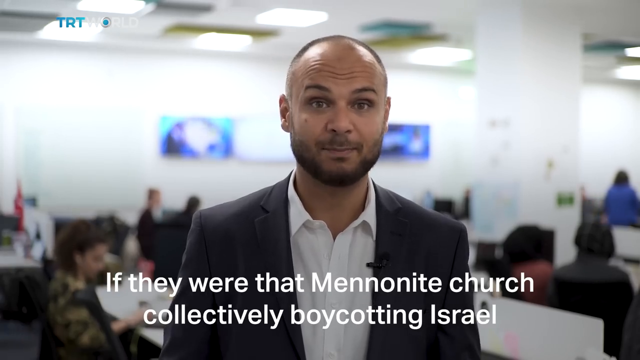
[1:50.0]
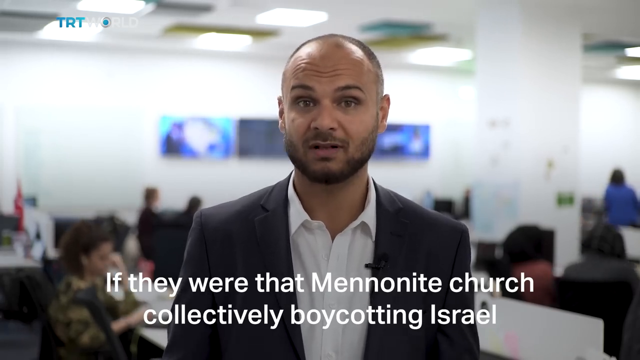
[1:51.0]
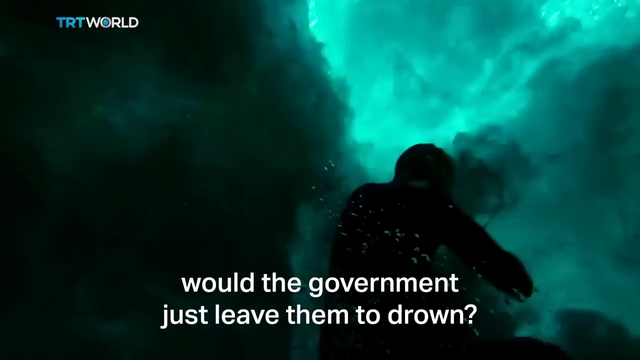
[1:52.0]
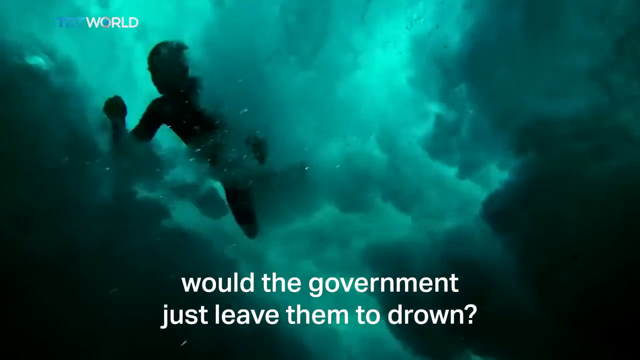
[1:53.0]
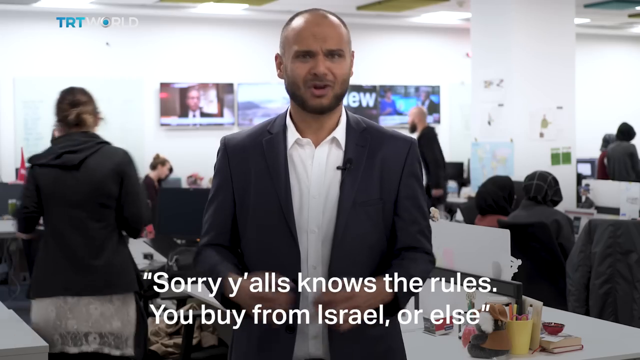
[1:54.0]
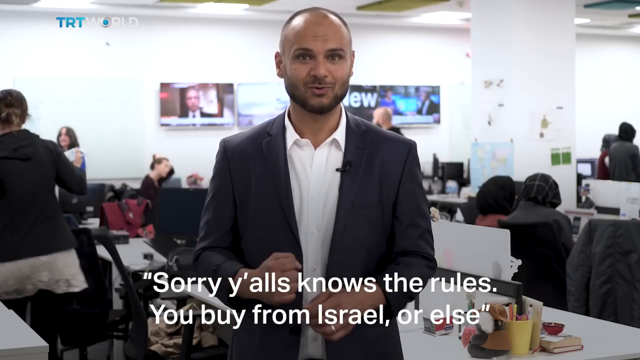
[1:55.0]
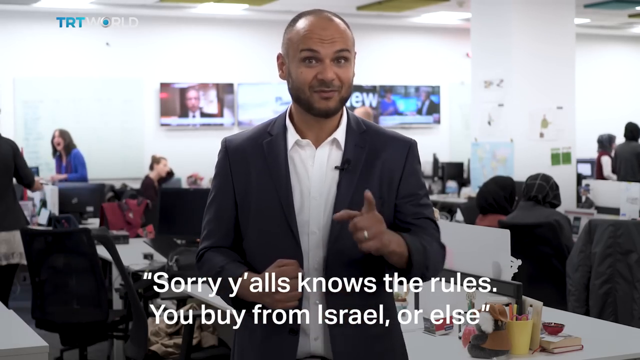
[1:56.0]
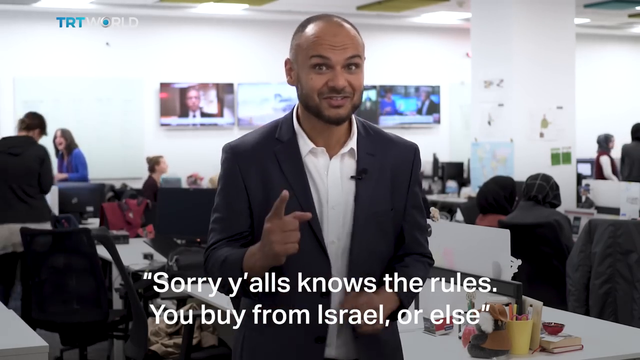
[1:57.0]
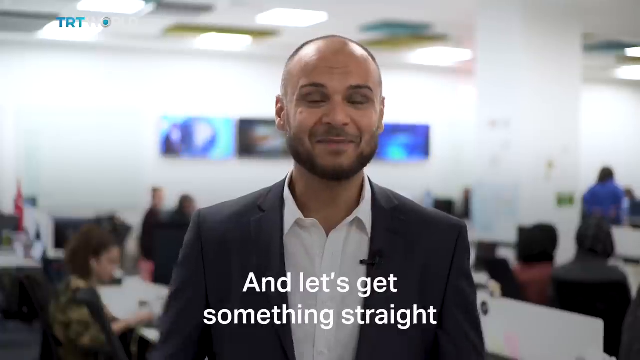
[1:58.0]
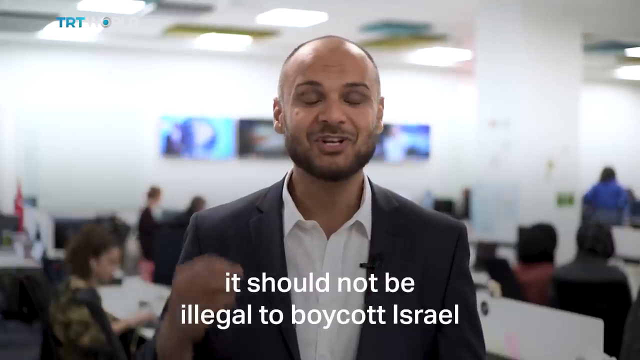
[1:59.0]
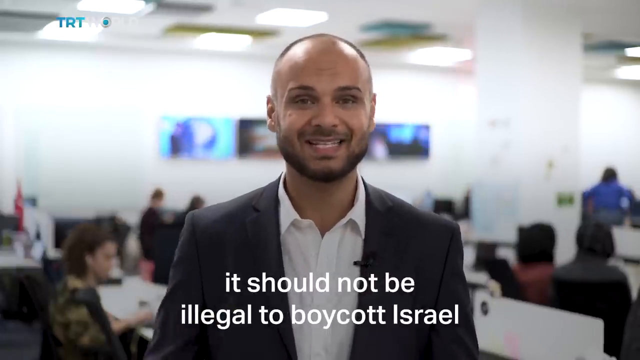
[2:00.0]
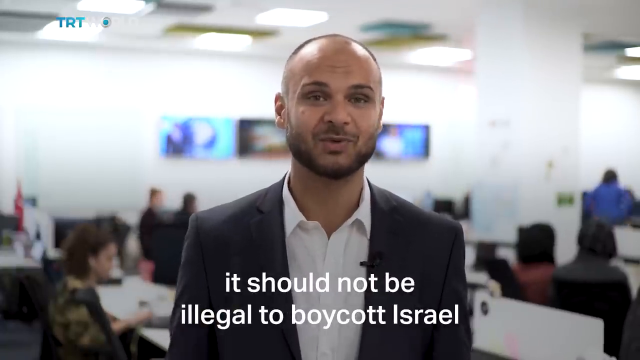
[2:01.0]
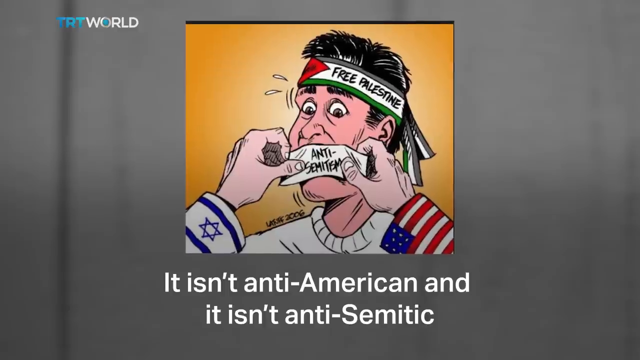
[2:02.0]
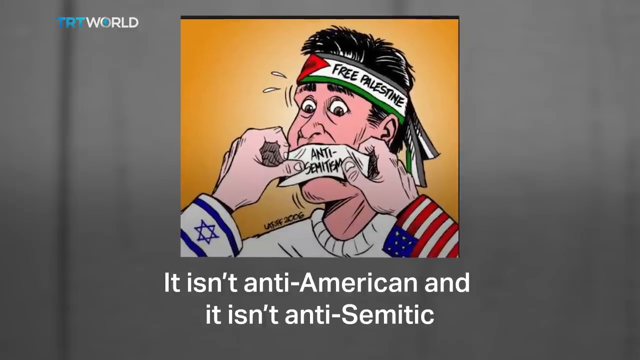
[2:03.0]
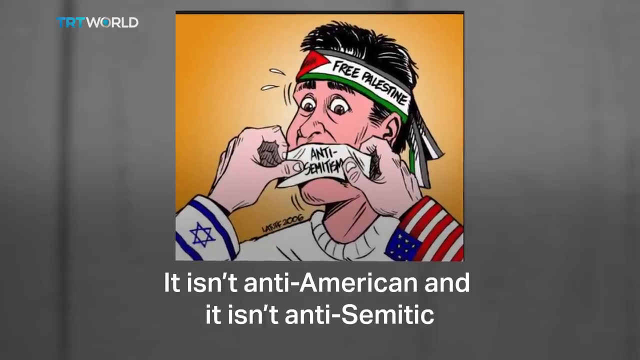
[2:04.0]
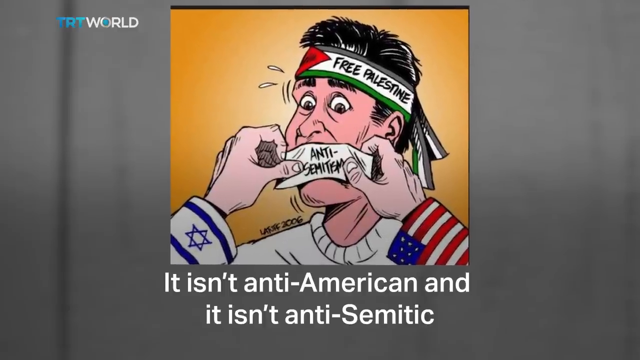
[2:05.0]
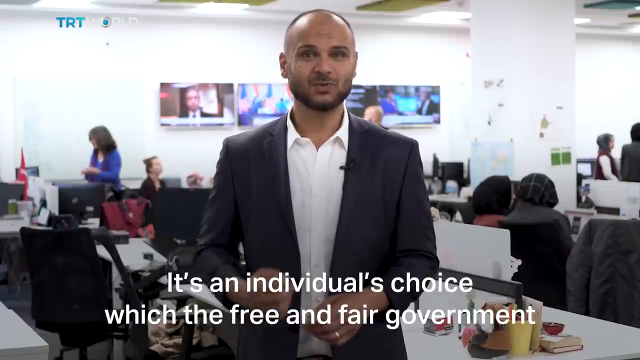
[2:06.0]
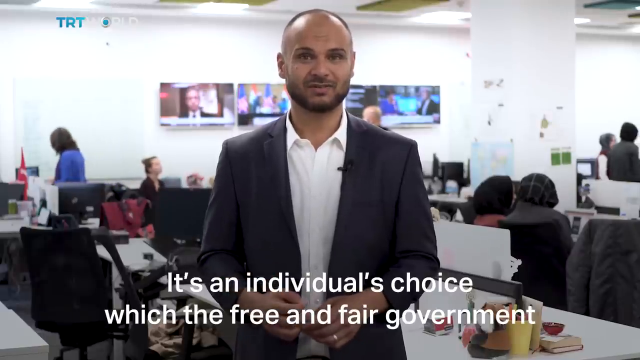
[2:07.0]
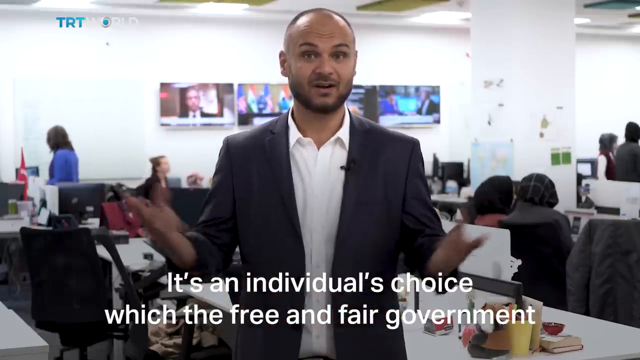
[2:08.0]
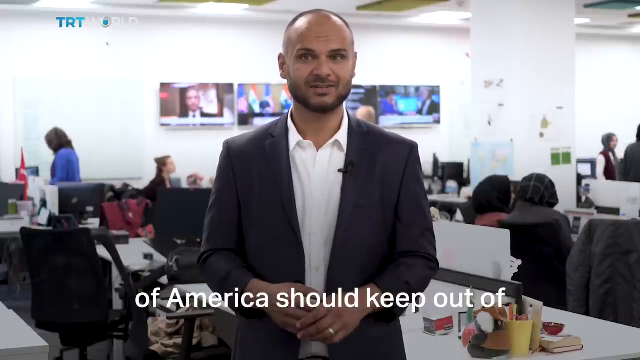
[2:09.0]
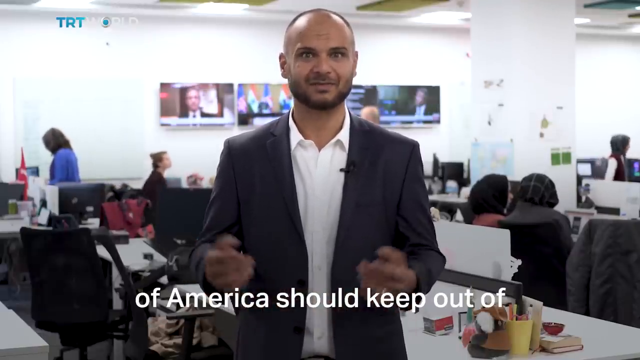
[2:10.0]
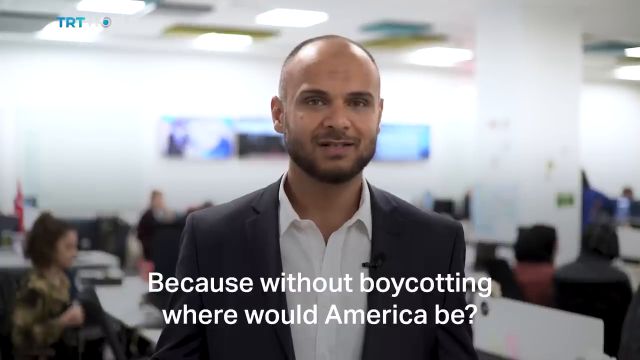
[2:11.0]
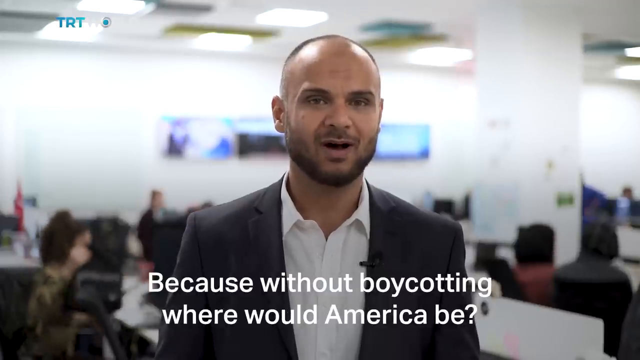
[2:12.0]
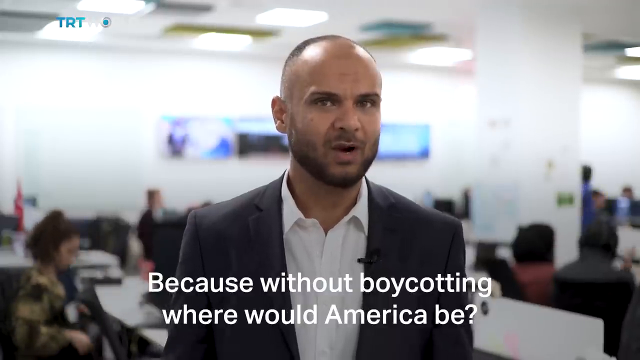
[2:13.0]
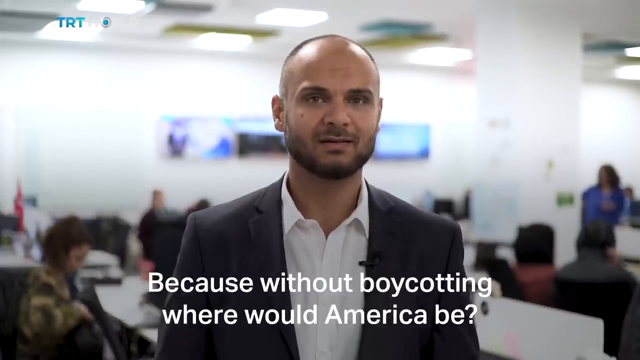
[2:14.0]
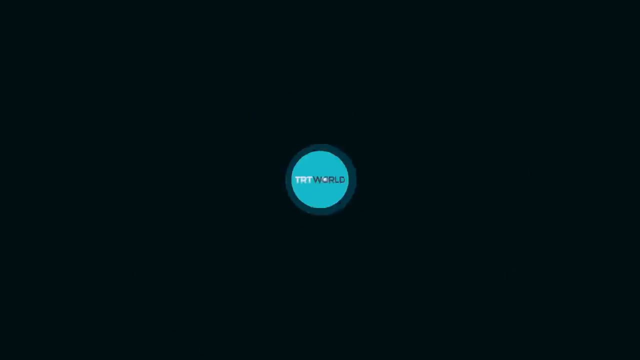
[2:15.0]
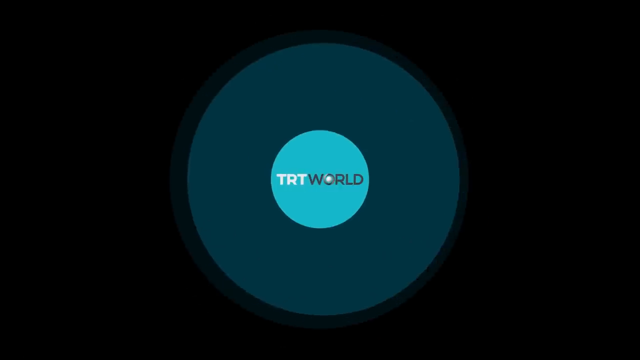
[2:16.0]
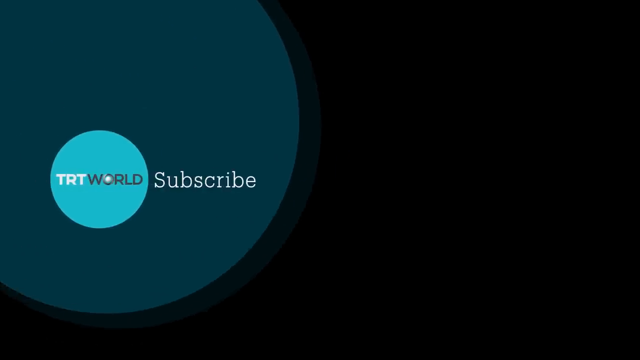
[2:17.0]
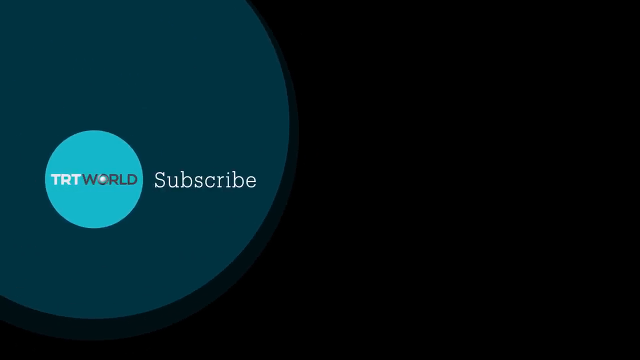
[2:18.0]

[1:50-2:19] The captions continue: "if they were that mennonite church collectively boycotting Israel, would the government just leave them to drown? Sorry, you all know the rules. You buy from Israel or else. And let's get something straight. It should not be illegal to boycott Israel. It isn't anti-American and it isn't anti-Semitic." Above these words is a cartoon-like image with a bandana that says "free Palestine", its mouth covered by a piece of paper that says "anti-Semitism". The captions continue, "it's an individual's choice which the free and fair government of America should keep out of because without boycotting, where would America be?" After that caption, the TRT World graphic appears: "TRT World" in a blue circle, with another light blue circle covering it that keeps zooming in and out. A call to action to subscribe for more news like that follows.